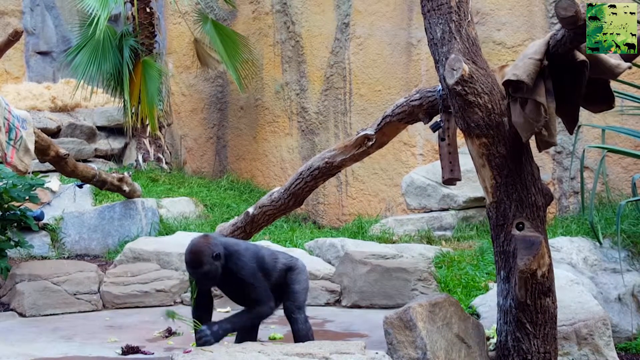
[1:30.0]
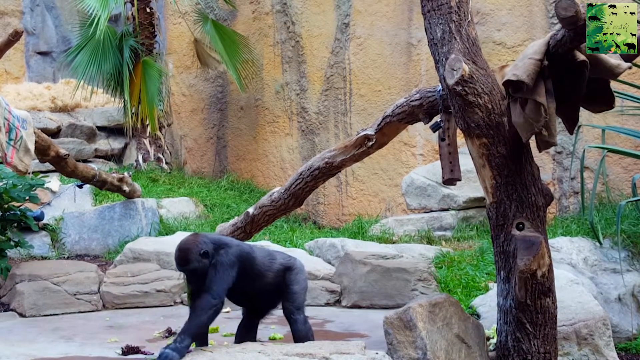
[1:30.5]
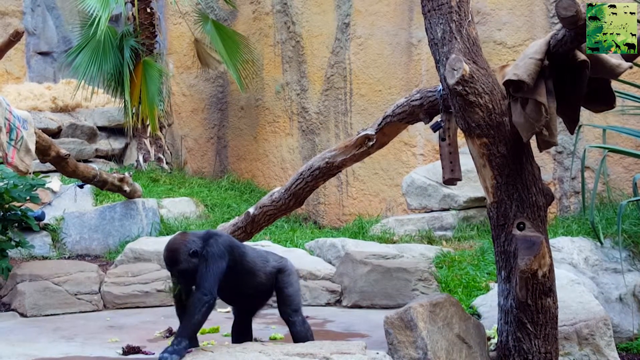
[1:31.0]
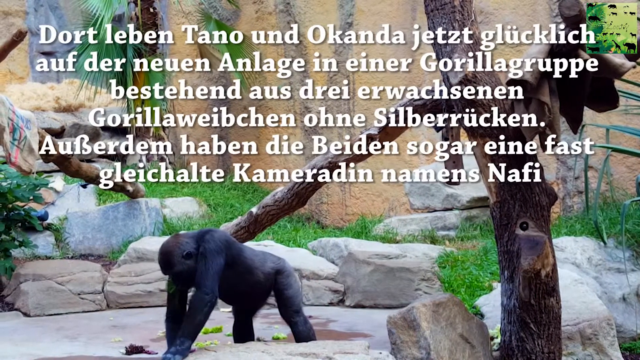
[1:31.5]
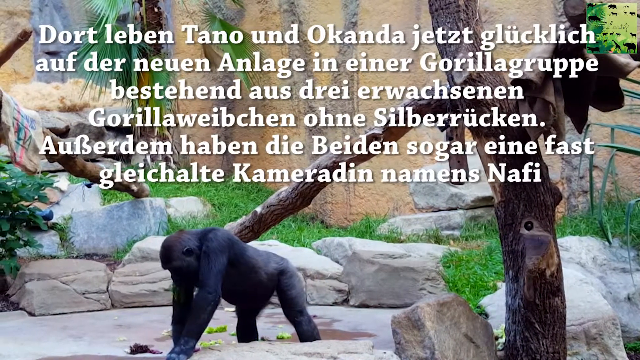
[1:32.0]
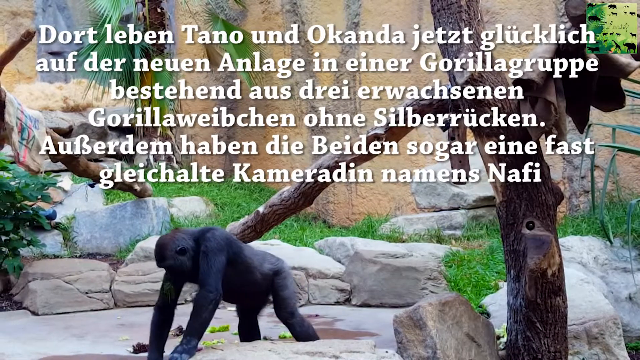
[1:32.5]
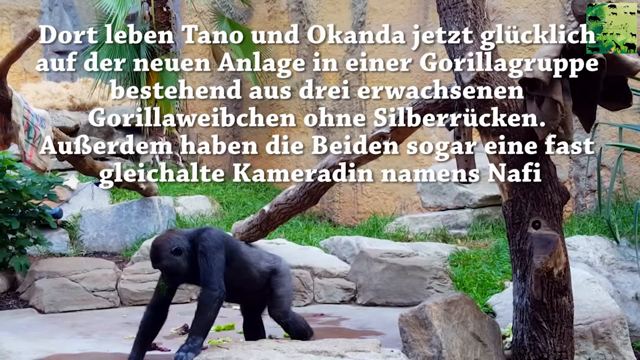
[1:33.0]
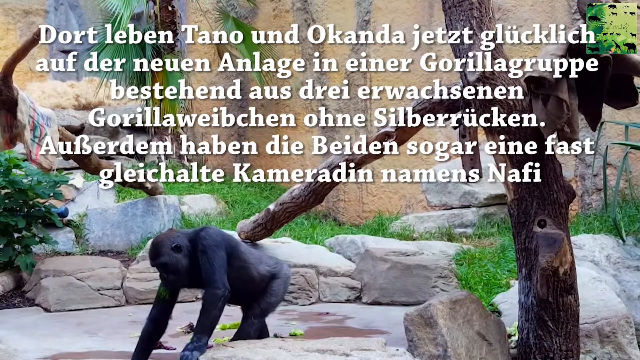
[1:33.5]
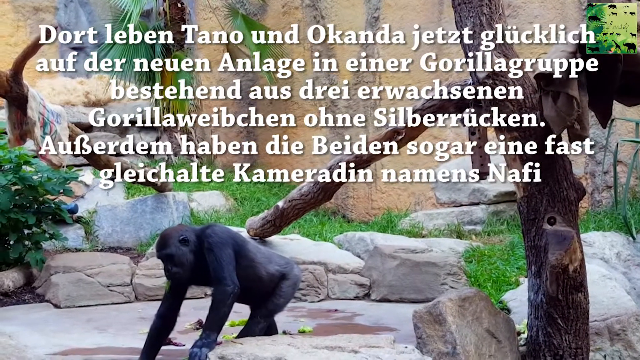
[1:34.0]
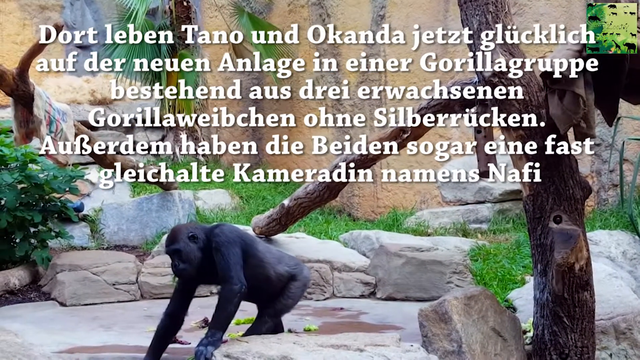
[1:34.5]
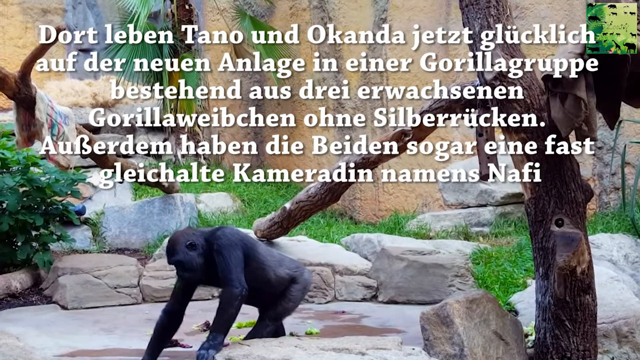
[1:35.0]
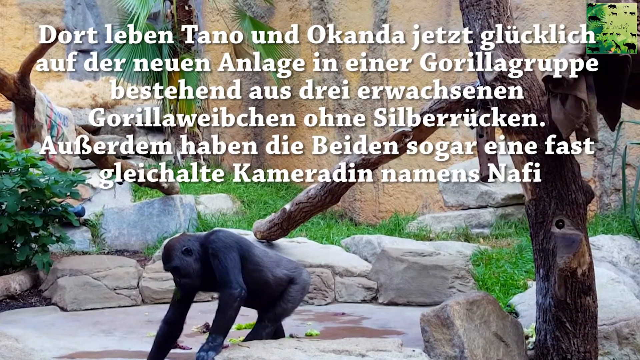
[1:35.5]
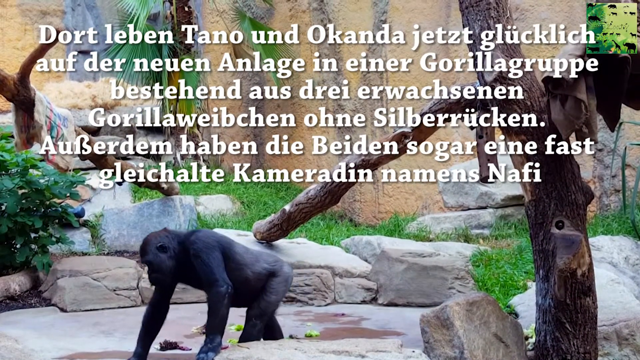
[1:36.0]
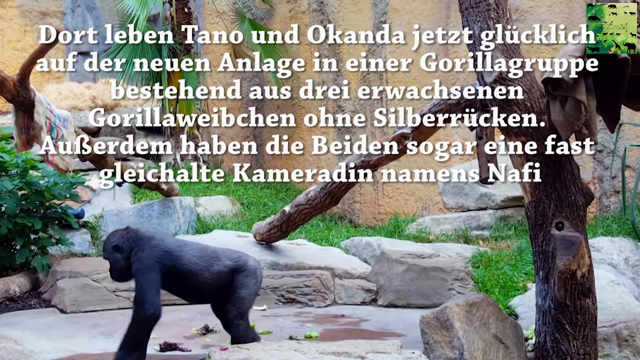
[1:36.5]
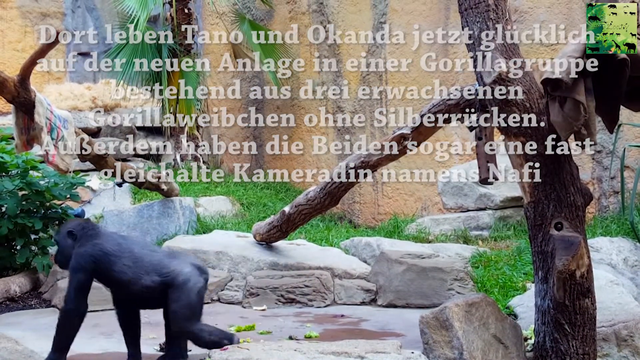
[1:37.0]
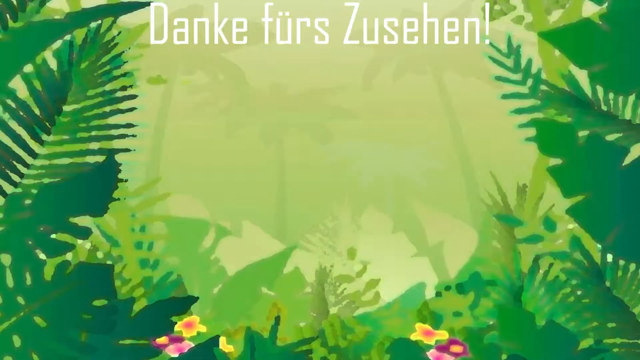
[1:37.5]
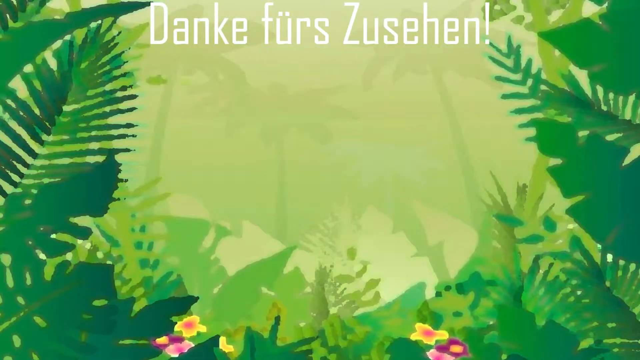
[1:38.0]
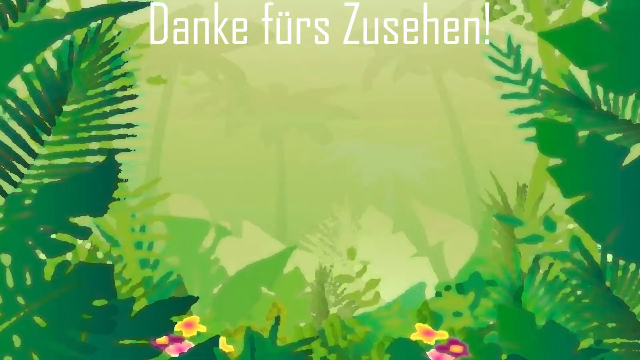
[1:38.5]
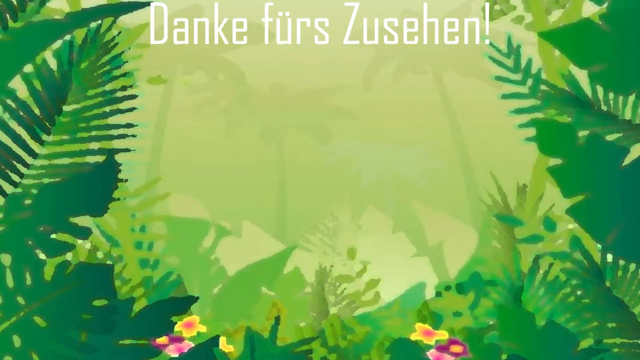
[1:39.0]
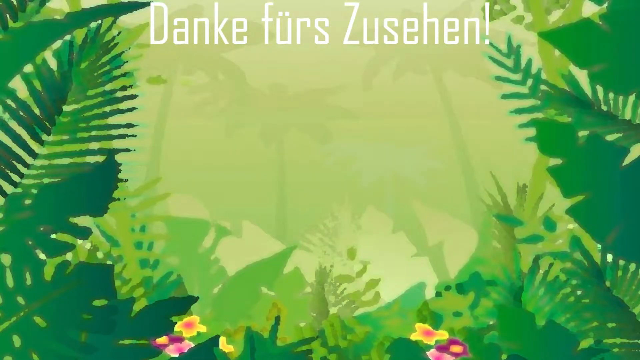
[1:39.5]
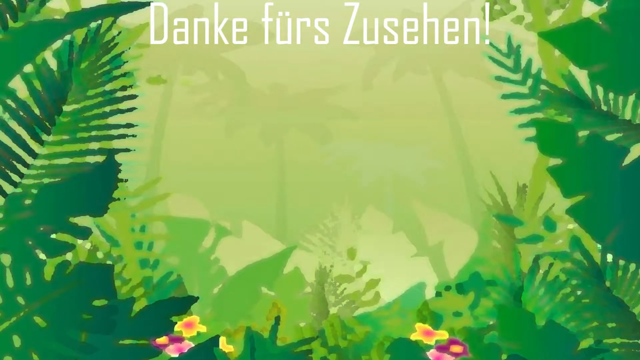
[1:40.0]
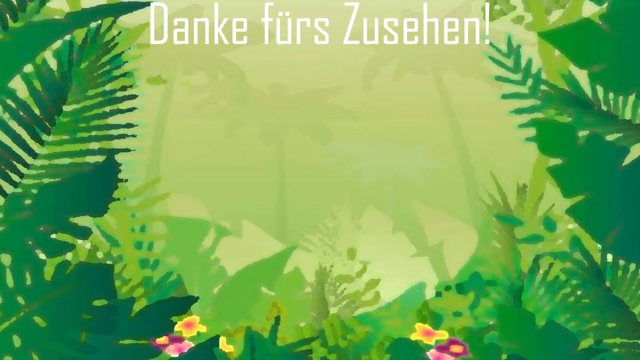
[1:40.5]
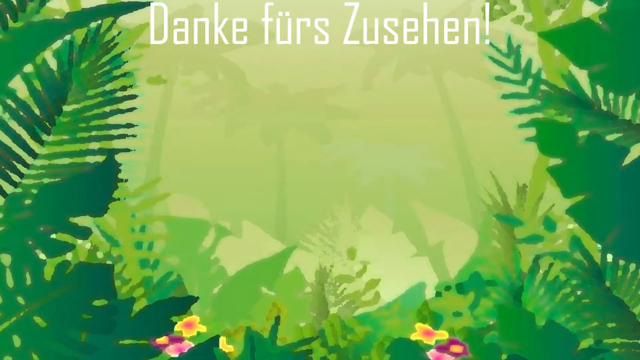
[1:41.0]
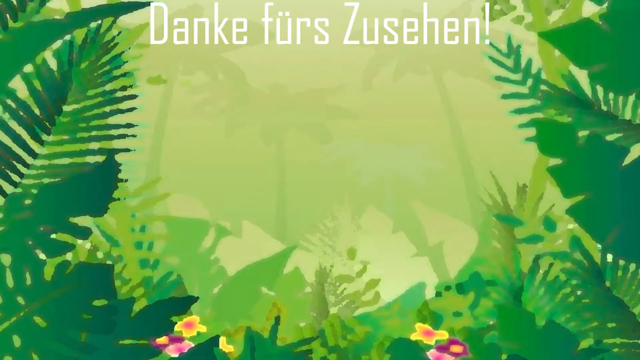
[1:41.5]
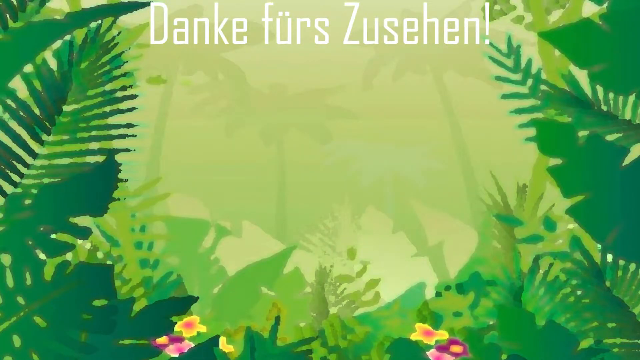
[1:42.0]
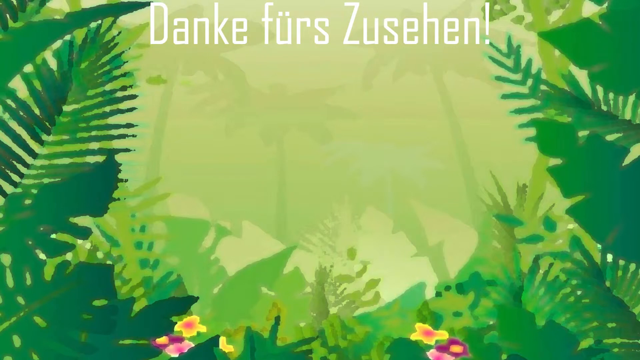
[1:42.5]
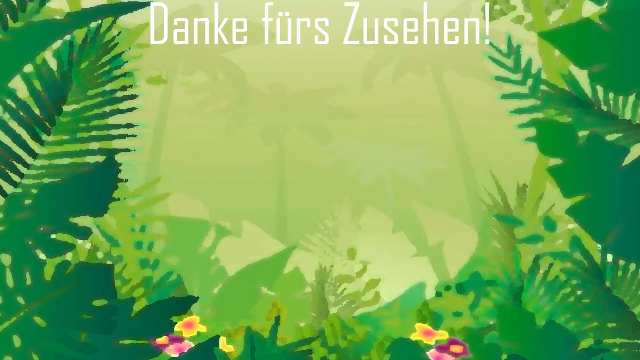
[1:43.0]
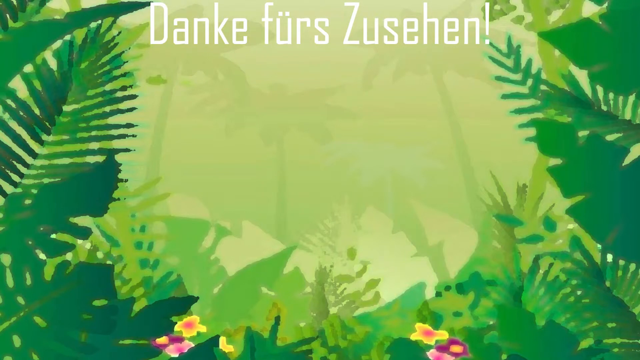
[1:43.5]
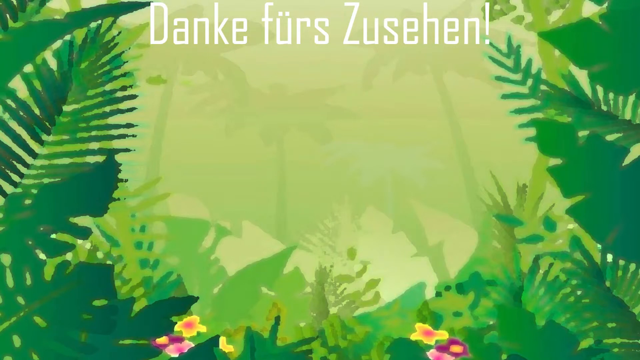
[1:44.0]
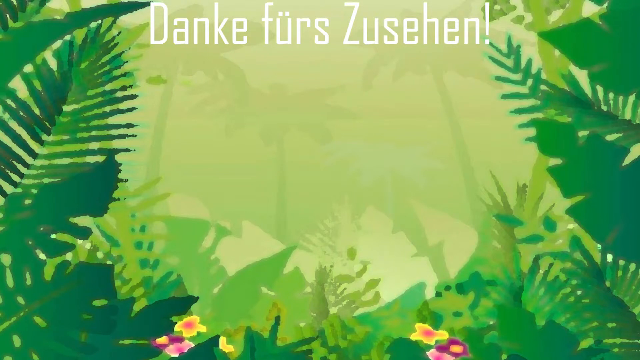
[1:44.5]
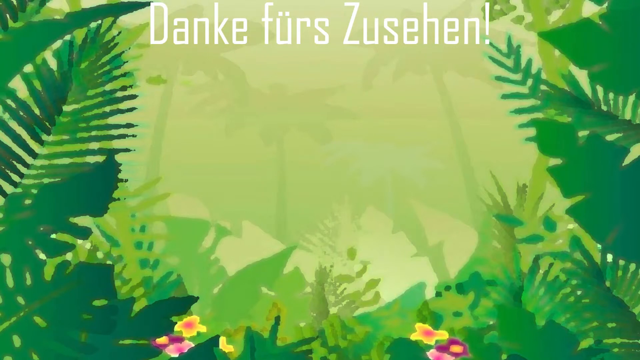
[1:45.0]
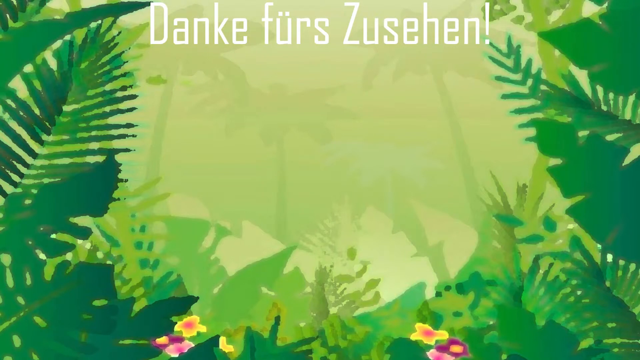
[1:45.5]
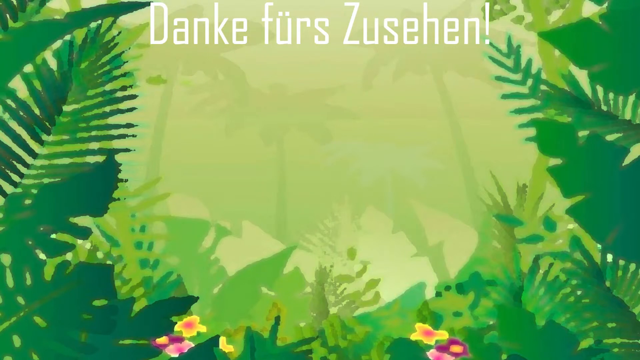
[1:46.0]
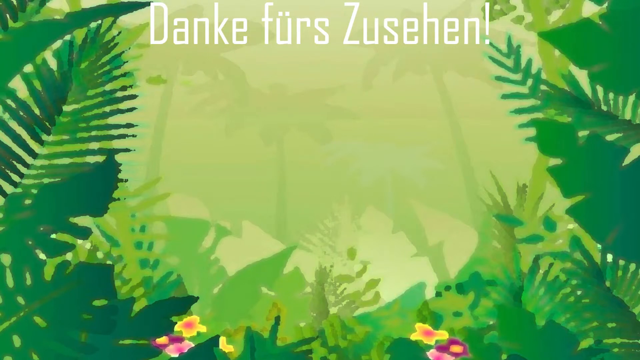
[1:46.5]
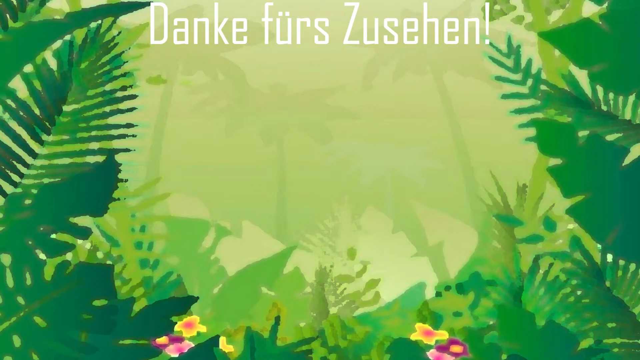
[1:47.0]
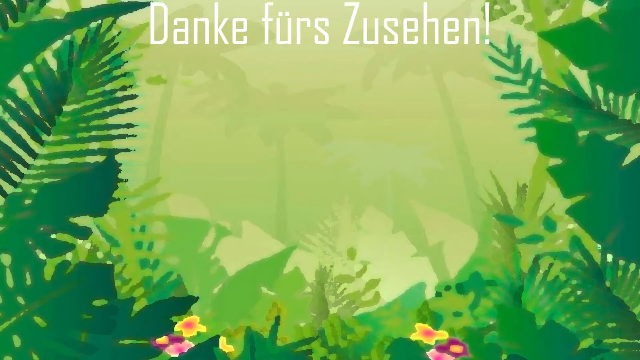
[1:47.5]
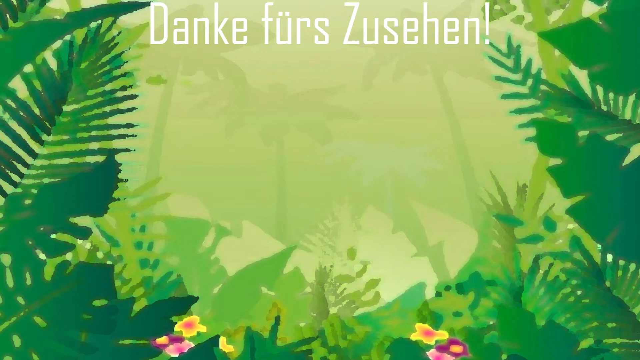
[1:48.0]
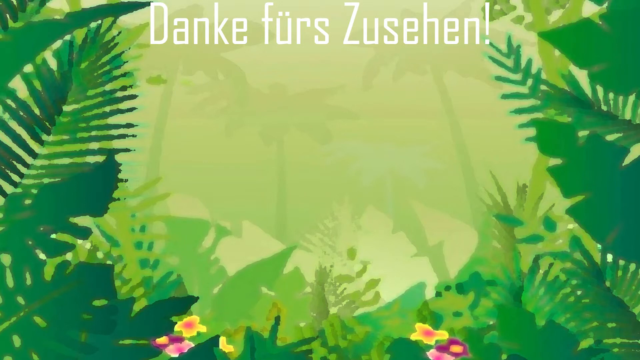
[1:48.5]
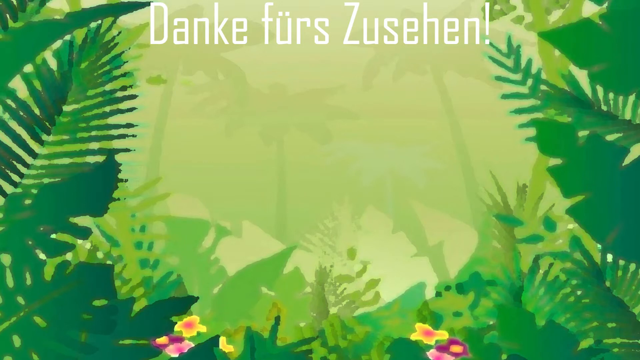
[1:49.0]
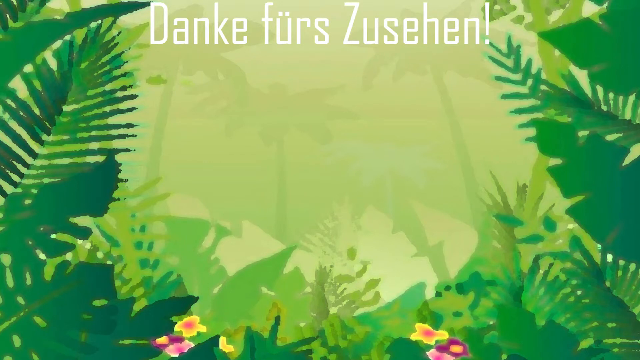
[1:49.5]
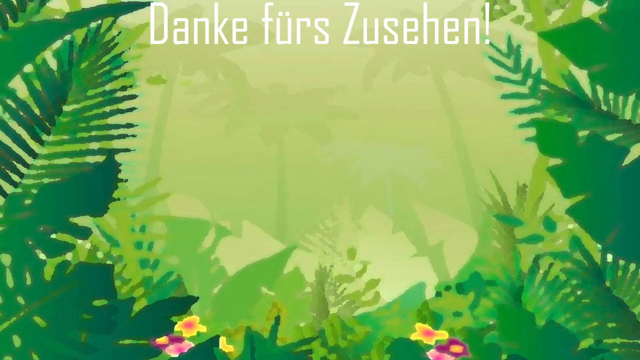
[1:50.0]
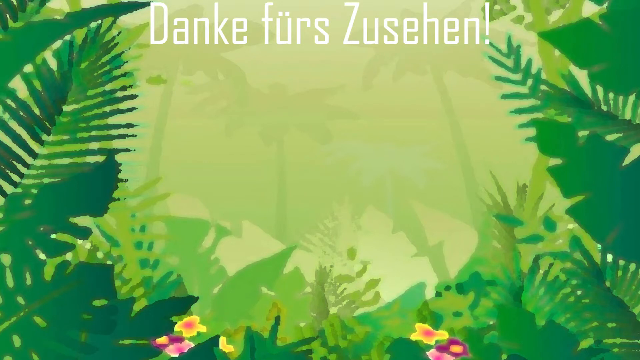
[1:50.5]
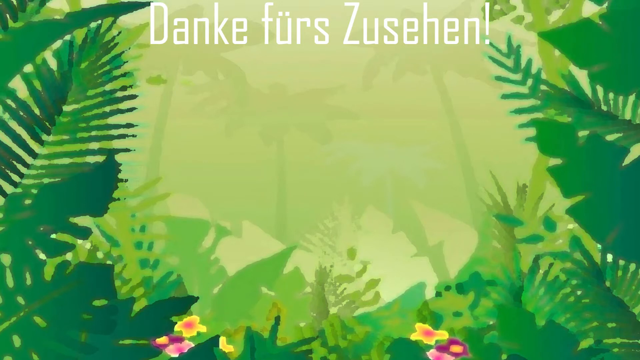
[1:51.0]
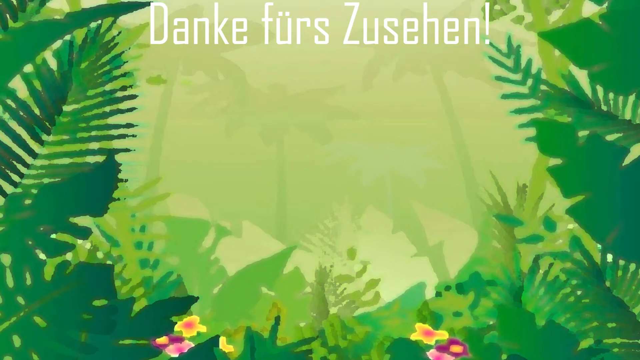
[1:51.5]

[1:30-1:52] On this side, more plants are visible in the background, along with another propped-up log that appears to have a piece of cloth on it with some color or maybe even text. There are also several fan-type palm fronds. The video then returns to the first watercolor jungle background. Text at the top apparently says thank you for watching in German. At the bottom are a few pink and yellow flowers in addition to the greenery all around. The final screen stays up for quite a few seconds. In the upper right corner of the video is a small square icon that was present the entire time but kind of blended into the scenery; it appears to contain a bunch of small animal silhouettes and the same jungle scene, and might be a logo for the channel or organization.